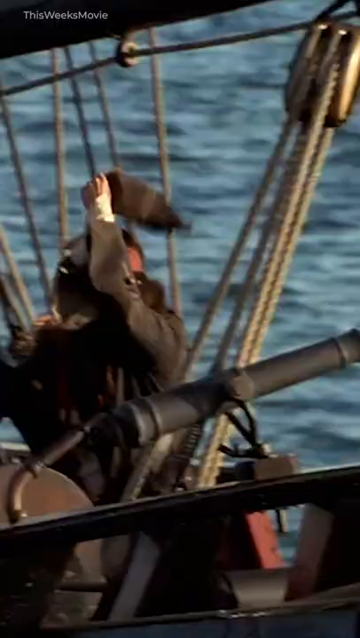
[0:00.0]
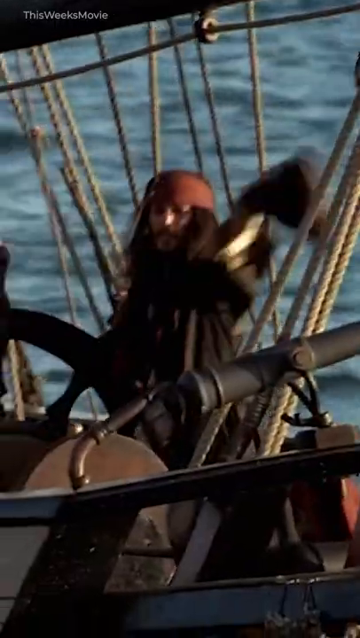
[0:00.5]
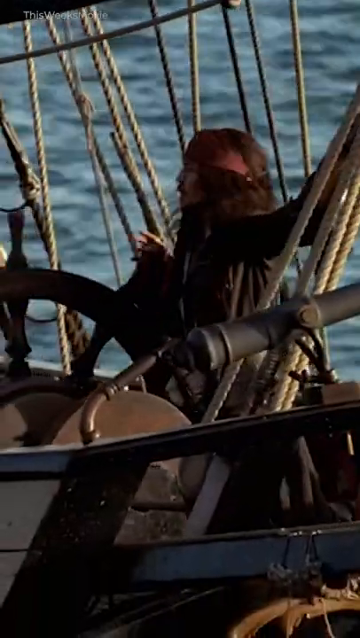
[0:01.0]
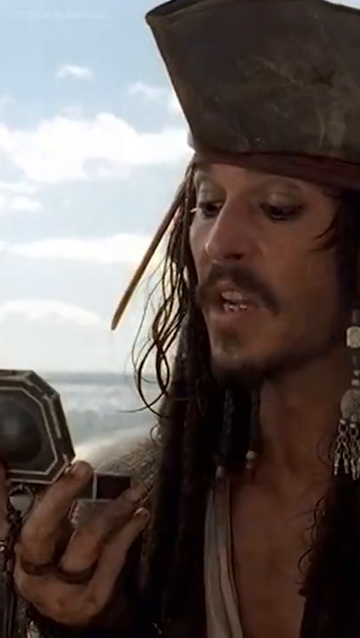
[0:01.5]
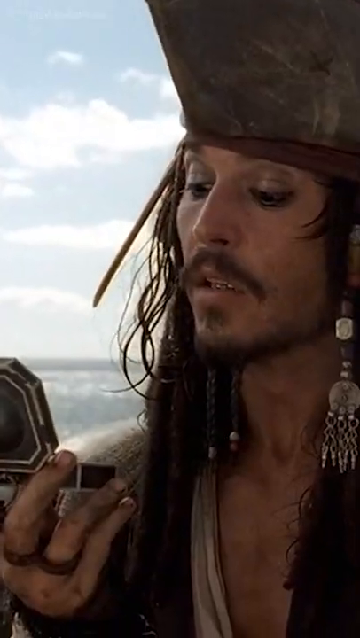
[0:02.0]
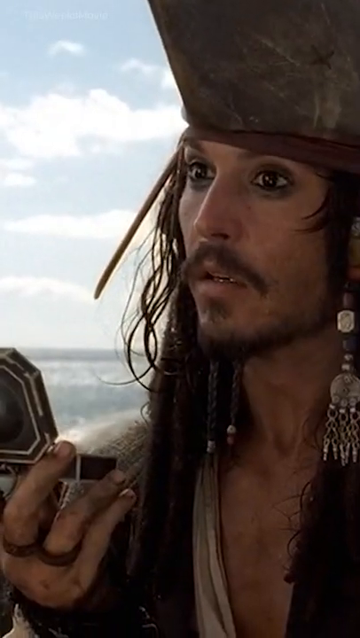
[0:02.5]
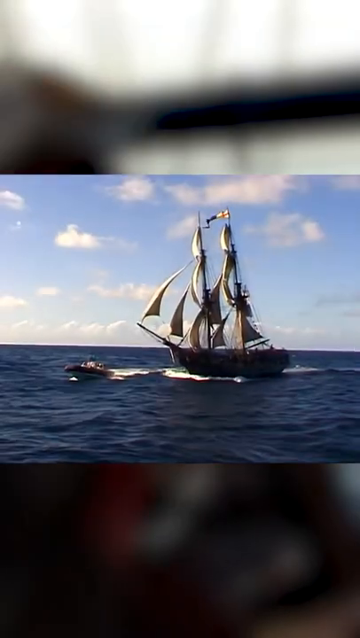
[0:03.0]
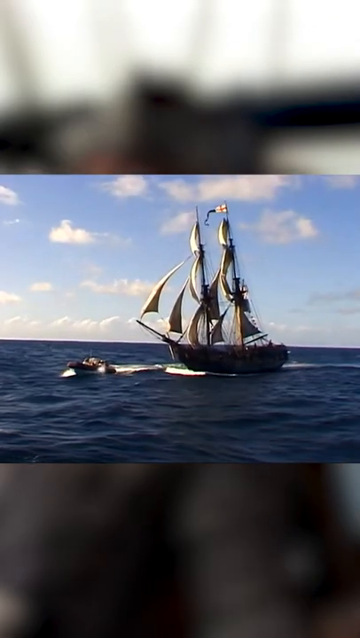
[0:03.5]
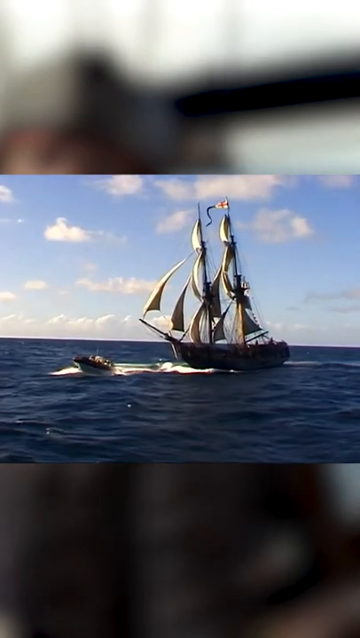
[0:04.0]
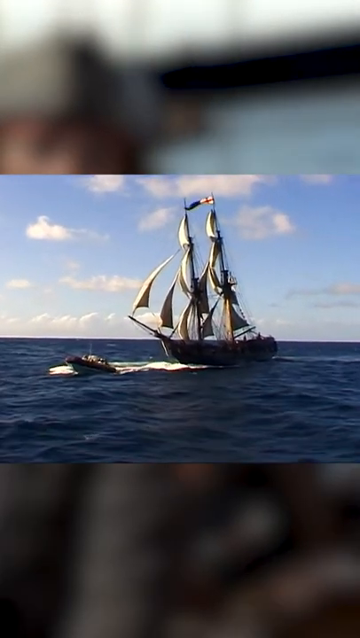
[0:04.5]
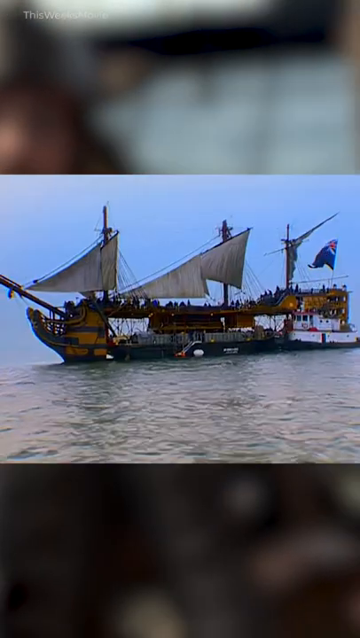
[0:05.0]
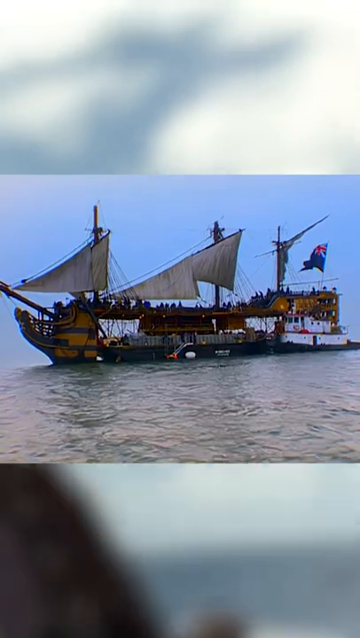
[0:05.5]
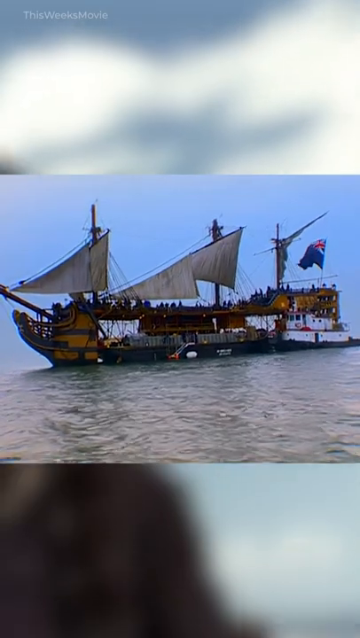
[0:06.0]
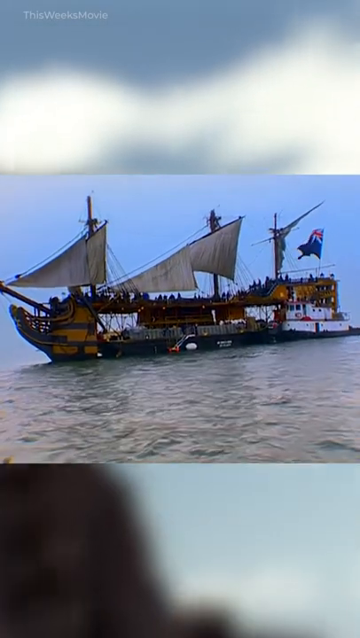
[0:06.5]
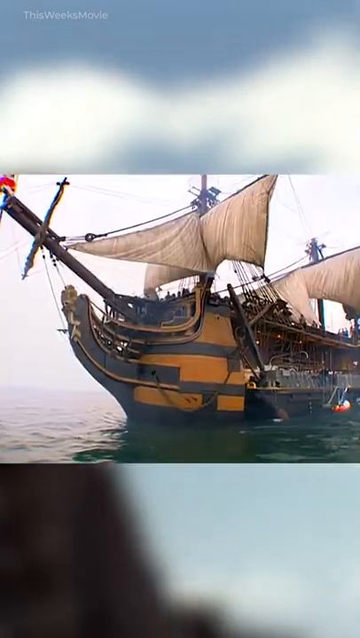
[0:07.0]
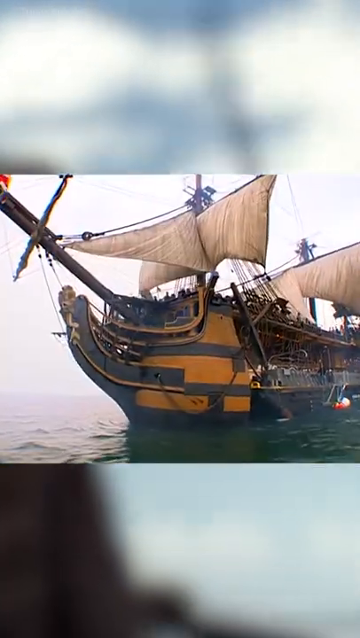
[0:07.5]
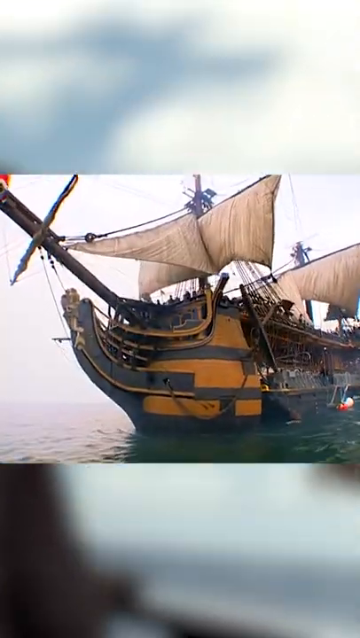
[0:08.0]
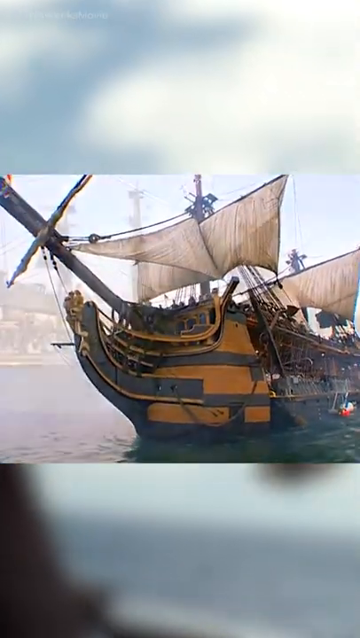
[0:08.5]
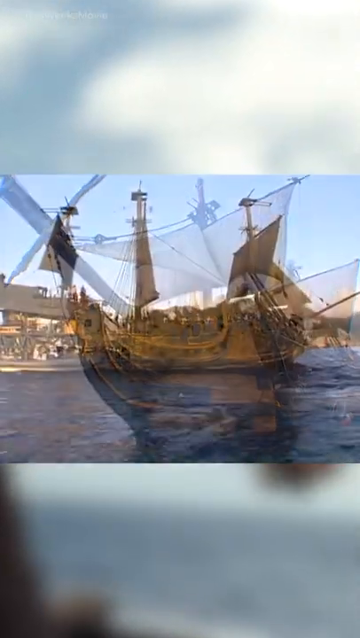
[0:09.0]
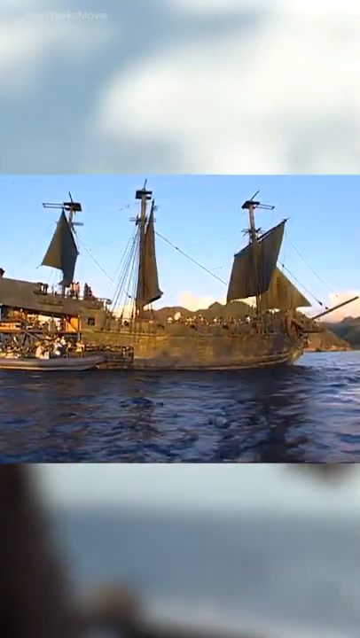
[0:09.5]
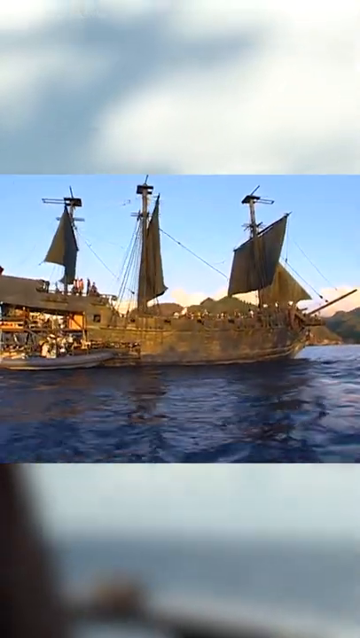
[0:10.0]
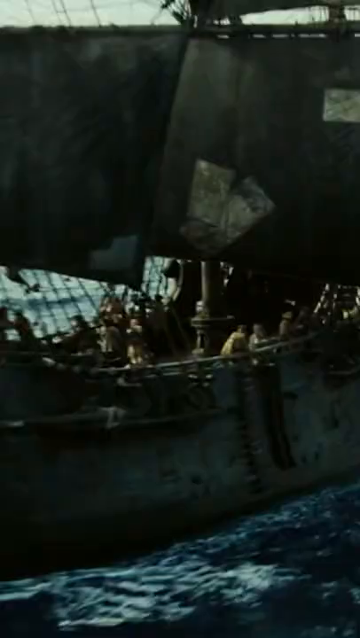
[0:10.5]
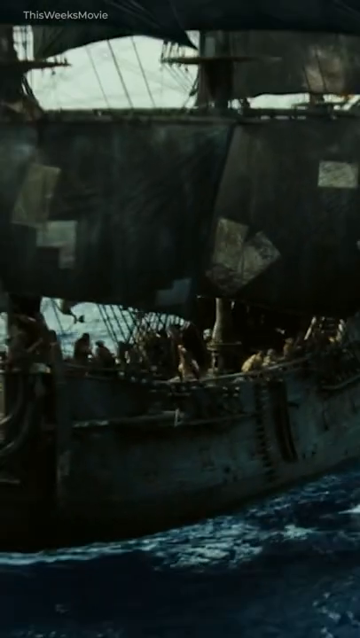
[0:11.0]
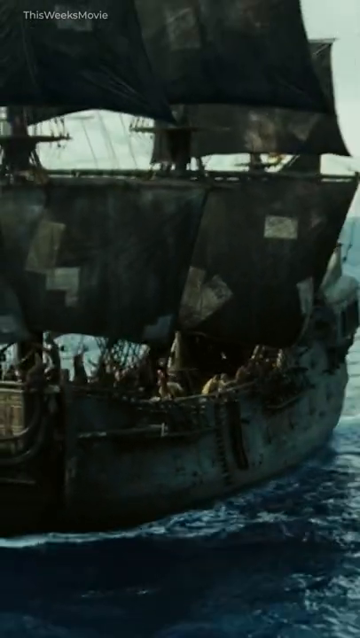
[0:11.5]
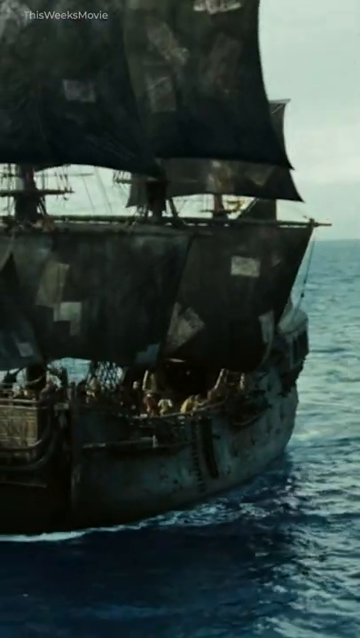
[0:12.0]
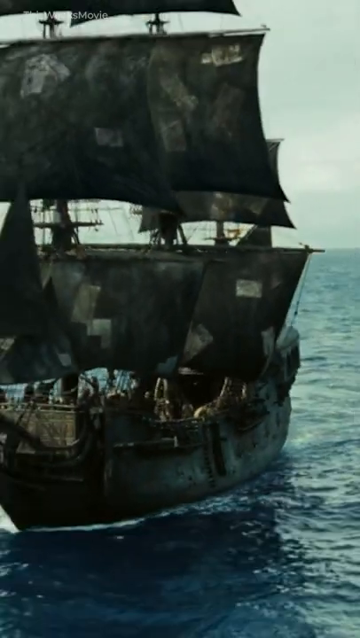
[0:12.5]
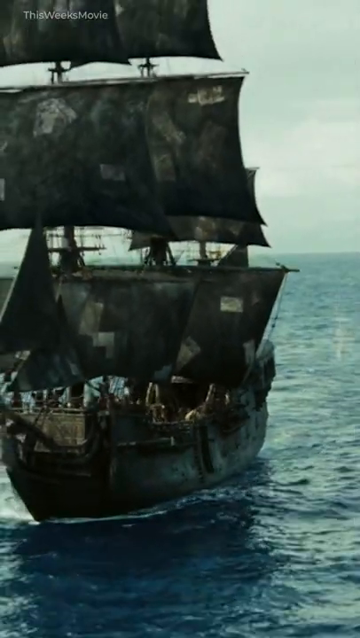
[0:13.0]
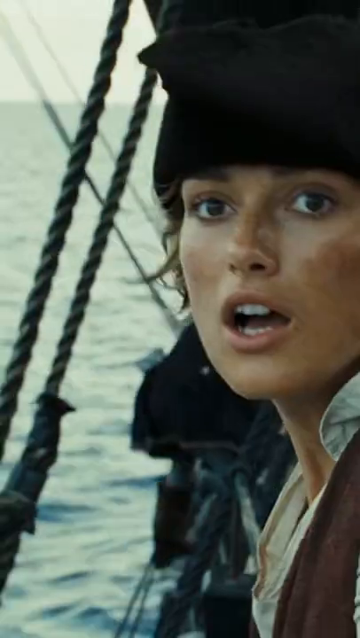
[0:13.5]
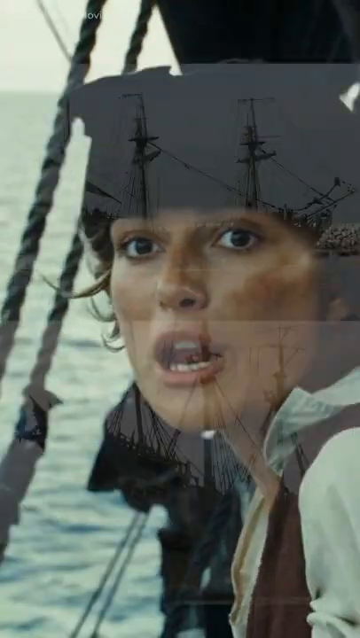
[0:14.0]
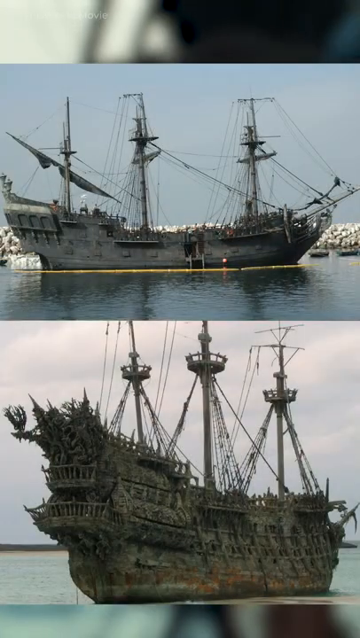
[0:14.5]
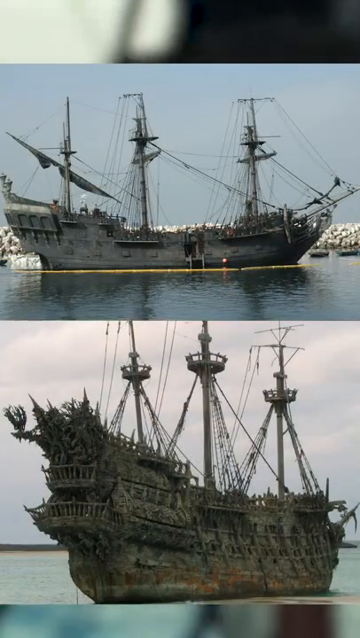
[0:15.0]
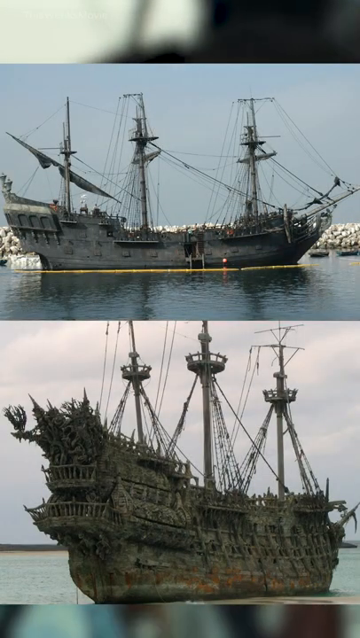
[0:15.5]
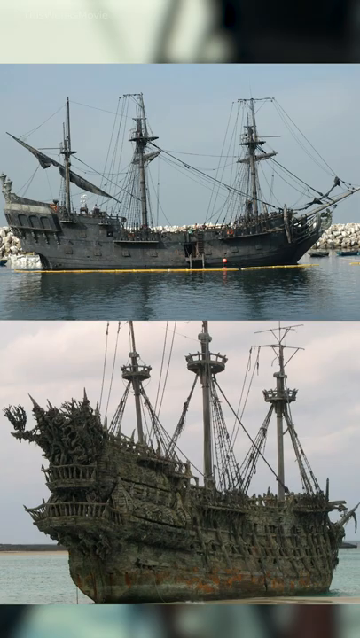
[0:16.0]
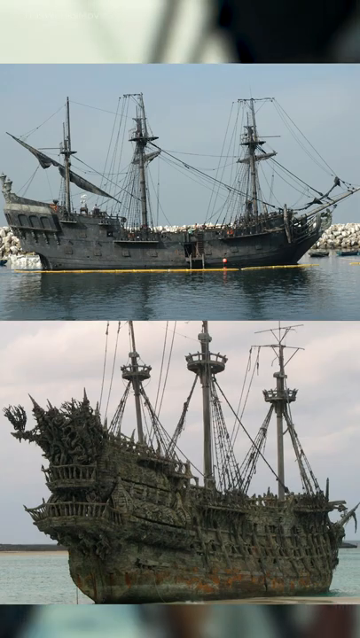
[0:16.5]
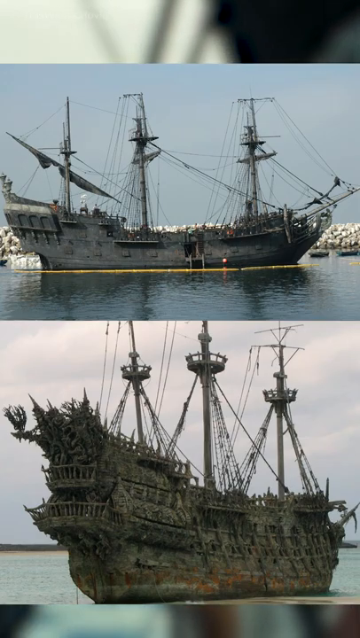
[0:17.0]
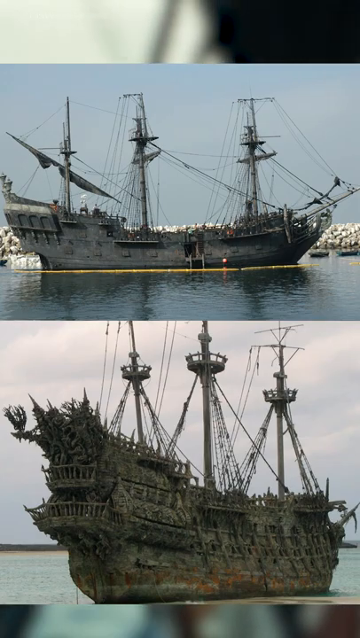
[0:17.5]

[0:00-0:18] The video demonstrates the similarities between real pirate ships and the pirate ships in the Pirates of the Caribbean movie. It opens on Johnny Depp as Captain Jack from Pirates of the Caribbean, on a pirate ship out in the ocean, looking at a compass. The video then switches so that the pirate footage keeps playing in the background, while the middle of the video shows what real pirate ships look like and how accurate the Pirates of the Caribbean movie got them. Toward the end, an image of Keira Knightley, who also appeared in Pirates of the Caribbean, appears from the movie; she is looking out. It then switches back to more real pirate ships, showing that the pirate ships in Pirates of the Caribbean were very accurate. The pirate ships are very large, with flags and masts, and look exactly like pirate ships. They are on a very large ocean, moving forward as the wind blows their sails.